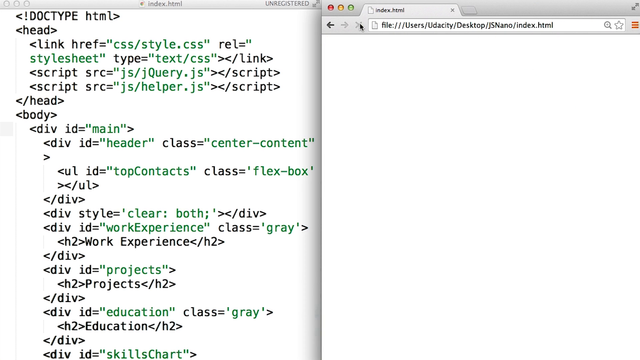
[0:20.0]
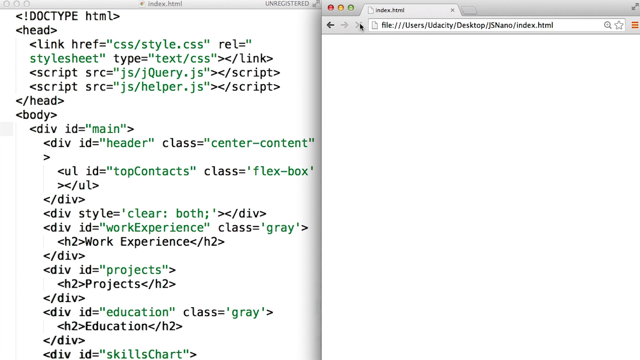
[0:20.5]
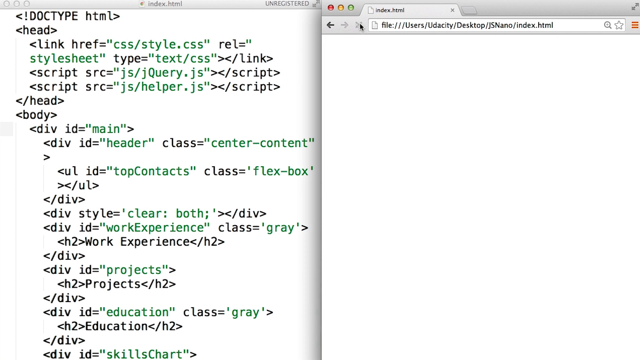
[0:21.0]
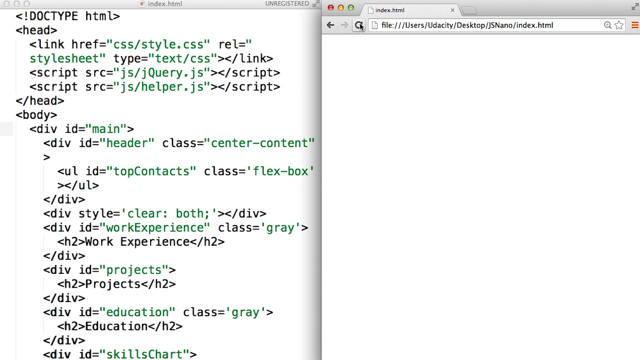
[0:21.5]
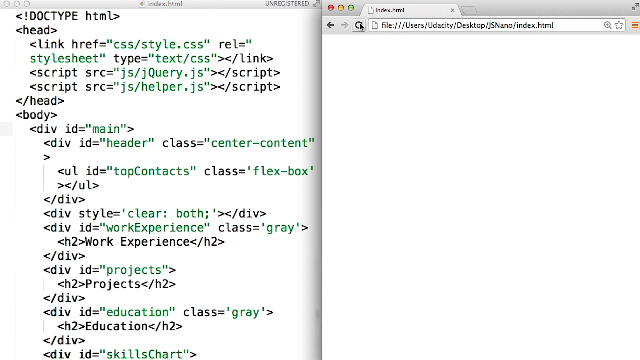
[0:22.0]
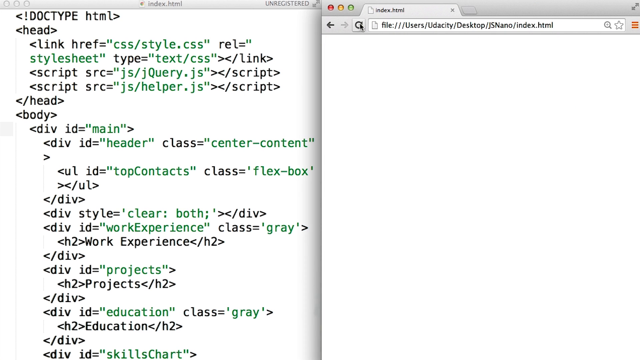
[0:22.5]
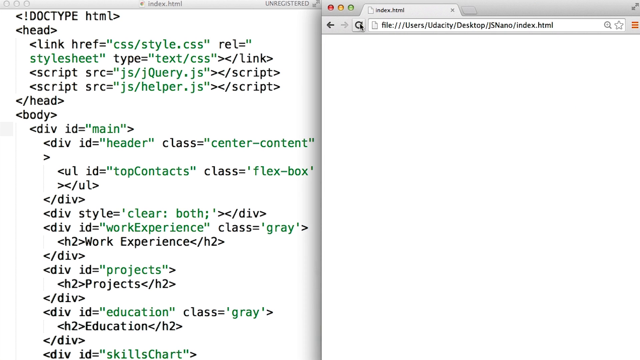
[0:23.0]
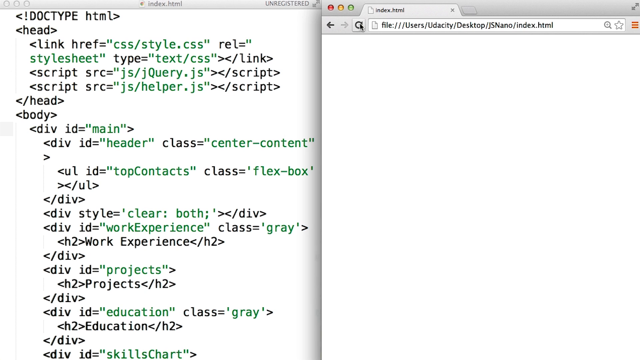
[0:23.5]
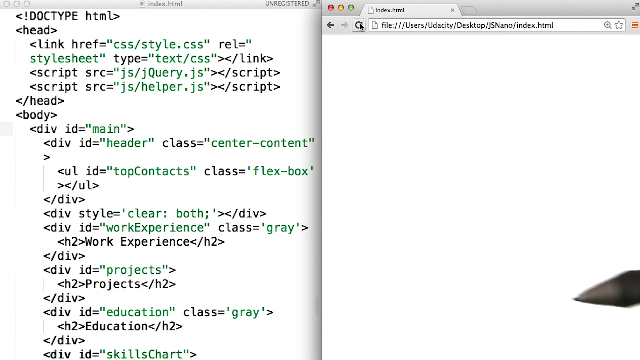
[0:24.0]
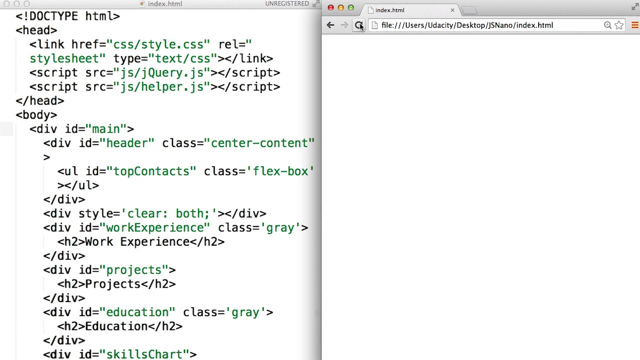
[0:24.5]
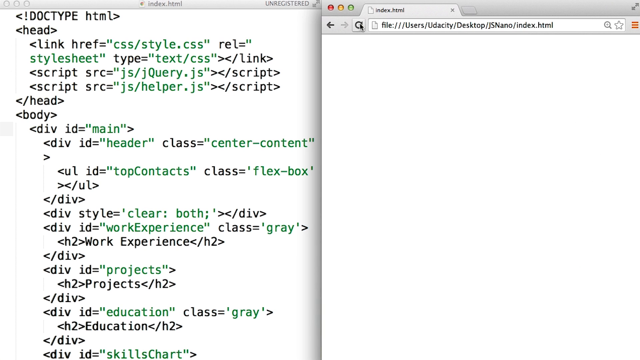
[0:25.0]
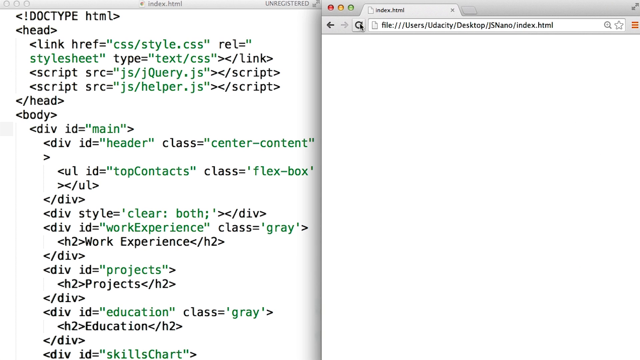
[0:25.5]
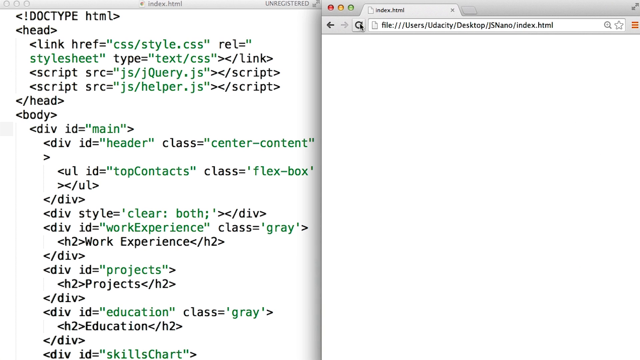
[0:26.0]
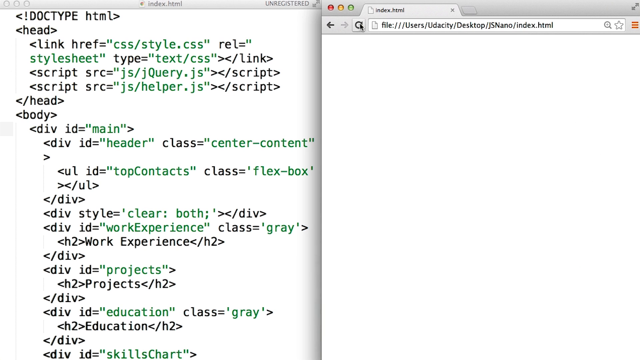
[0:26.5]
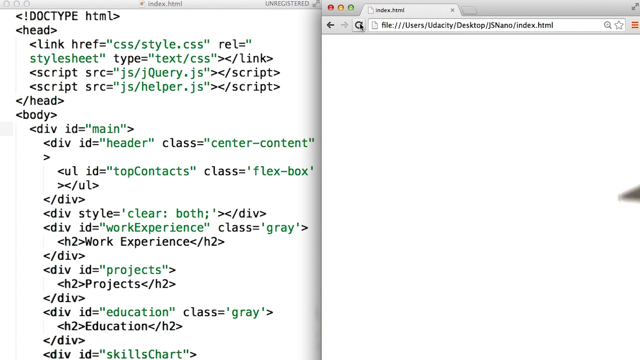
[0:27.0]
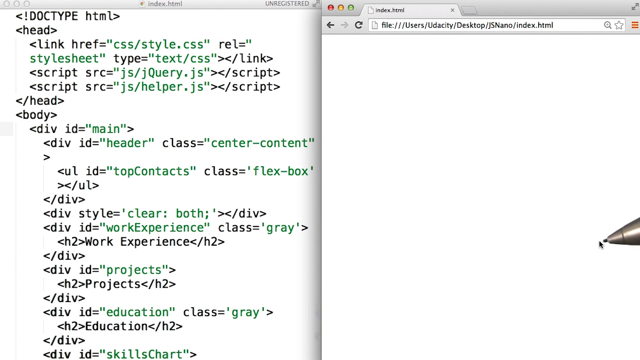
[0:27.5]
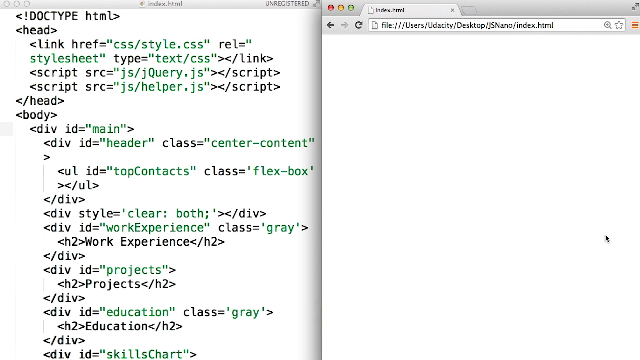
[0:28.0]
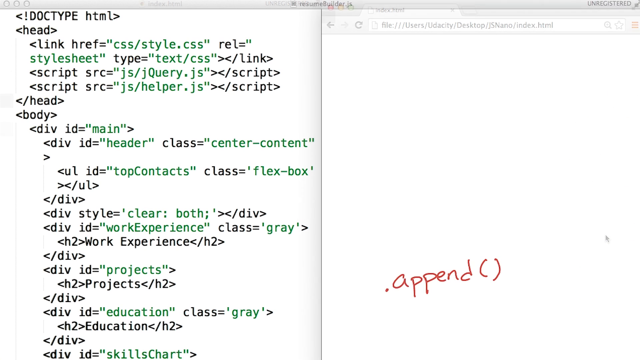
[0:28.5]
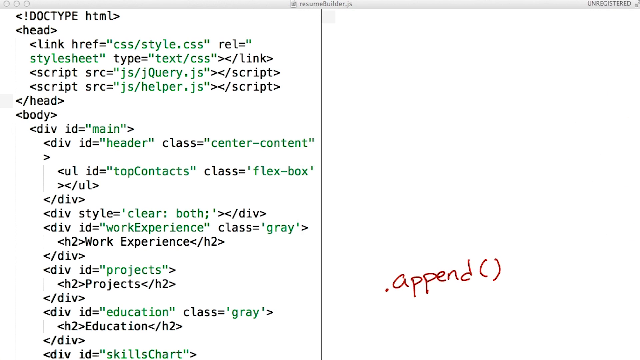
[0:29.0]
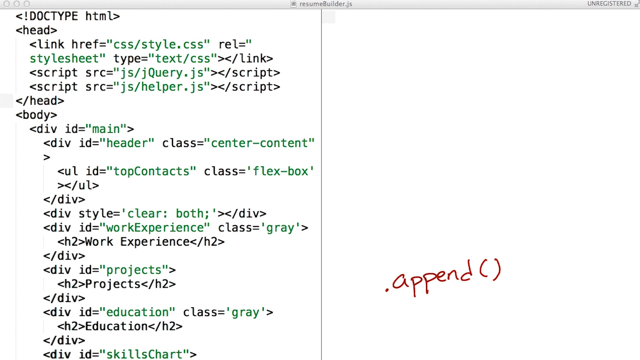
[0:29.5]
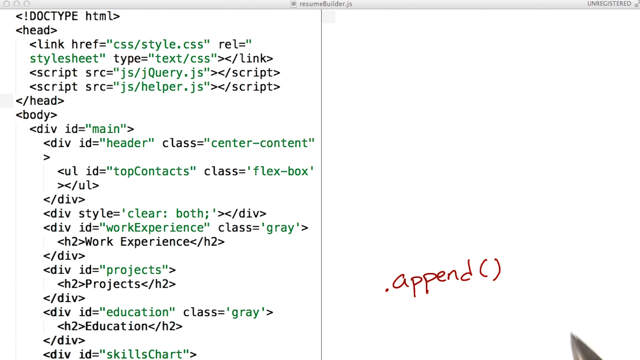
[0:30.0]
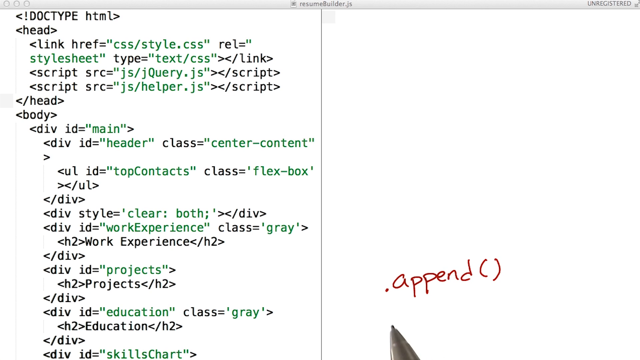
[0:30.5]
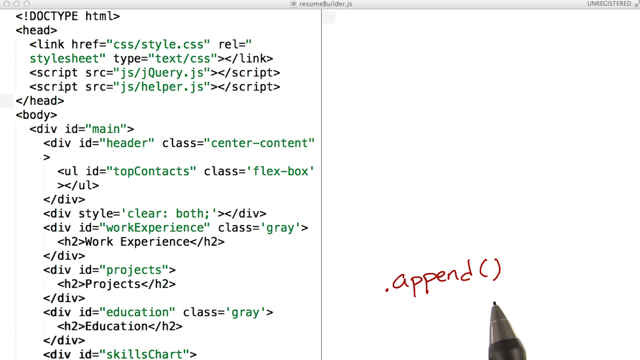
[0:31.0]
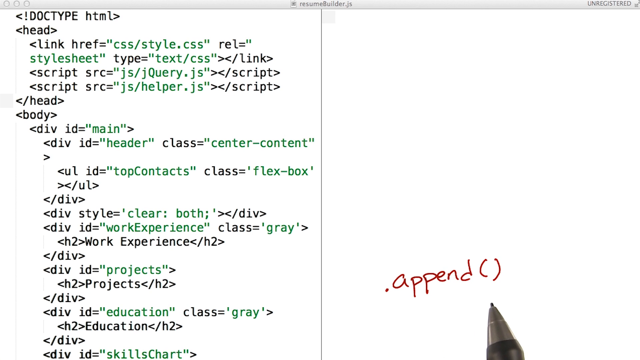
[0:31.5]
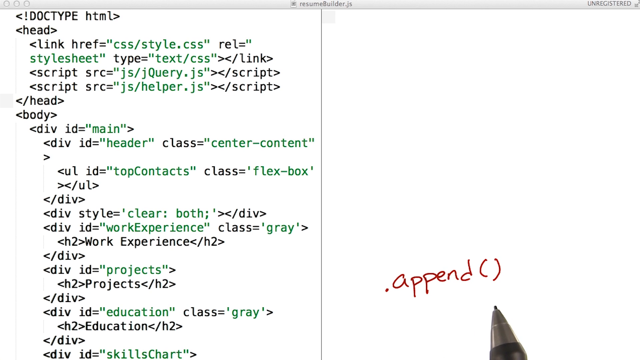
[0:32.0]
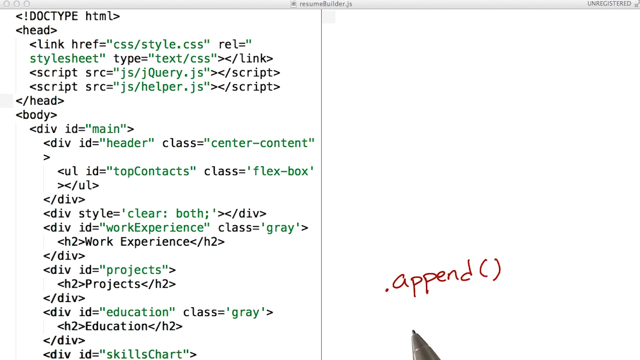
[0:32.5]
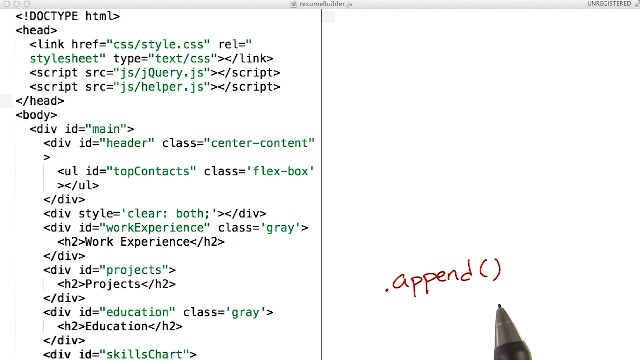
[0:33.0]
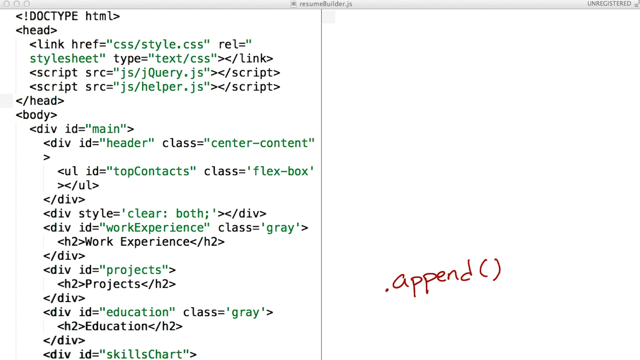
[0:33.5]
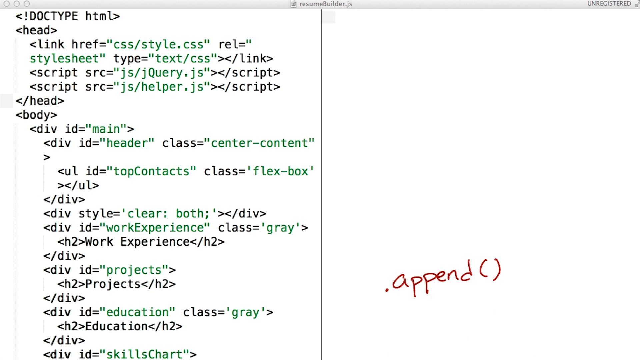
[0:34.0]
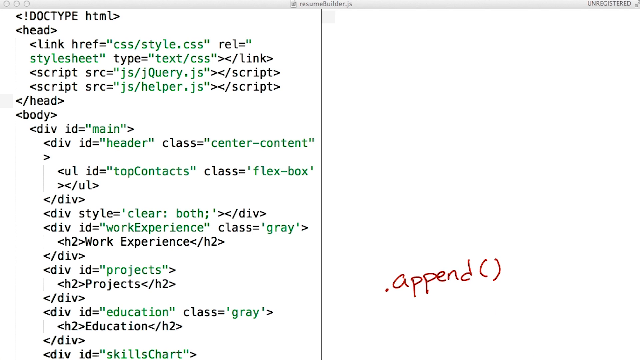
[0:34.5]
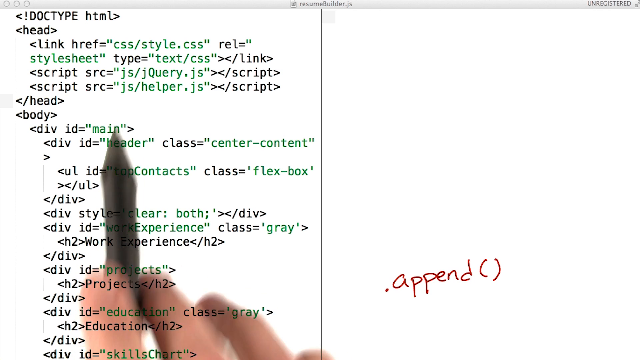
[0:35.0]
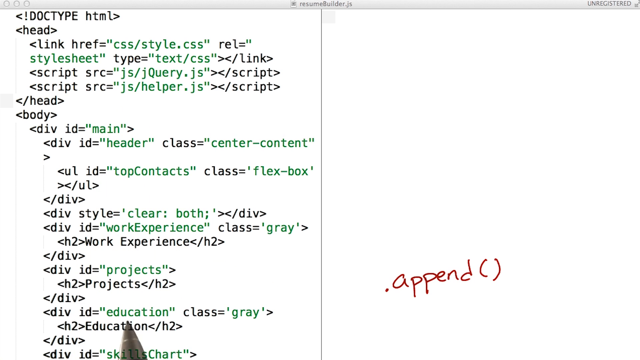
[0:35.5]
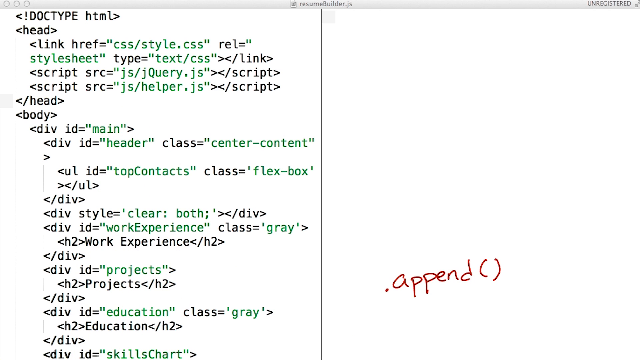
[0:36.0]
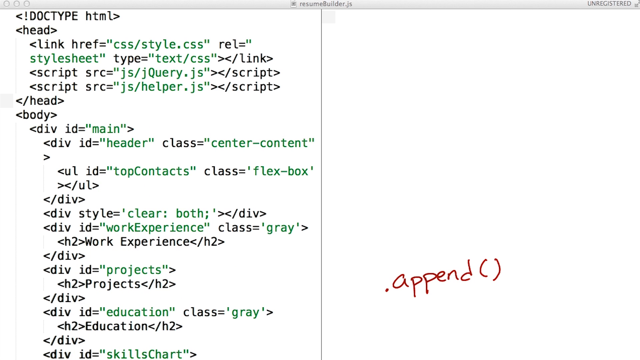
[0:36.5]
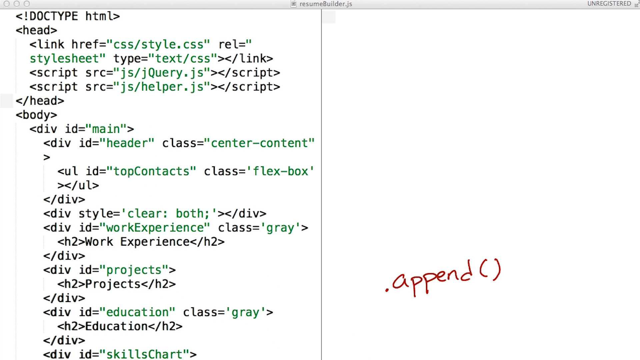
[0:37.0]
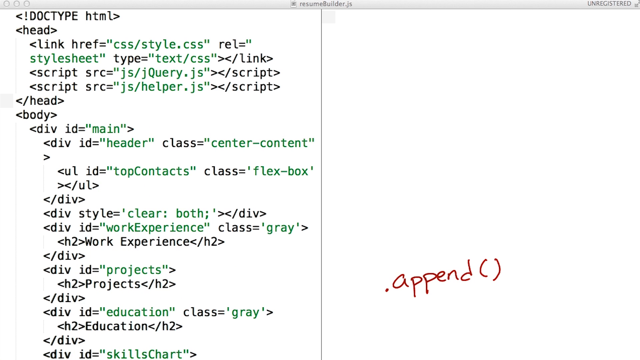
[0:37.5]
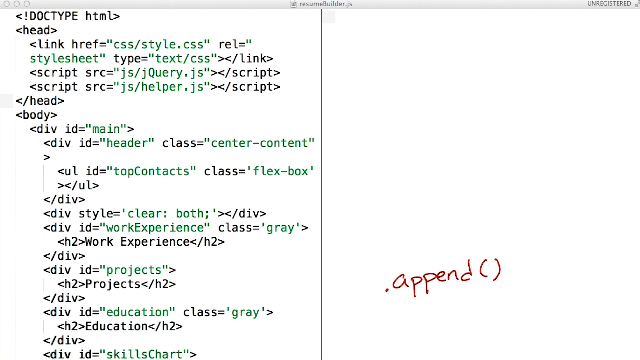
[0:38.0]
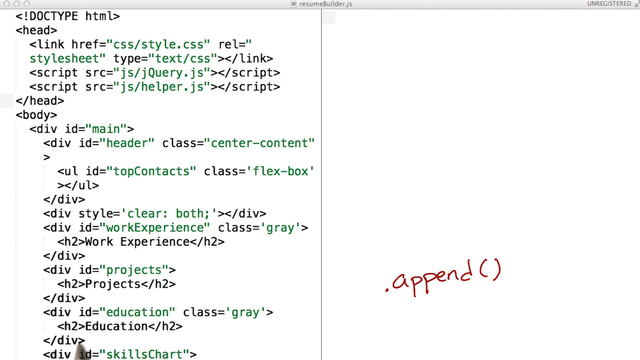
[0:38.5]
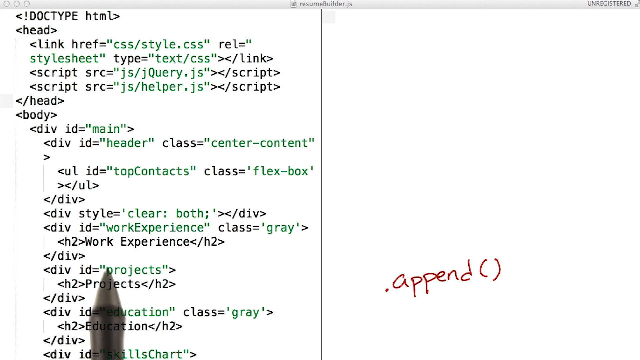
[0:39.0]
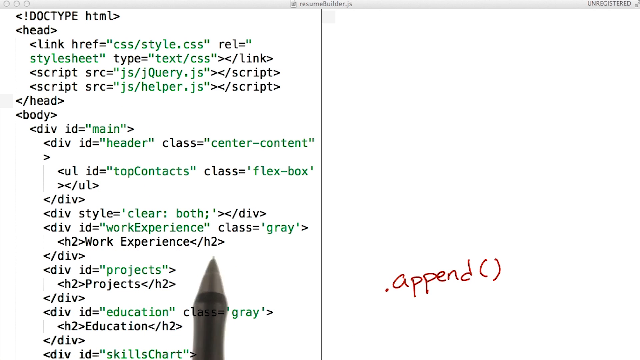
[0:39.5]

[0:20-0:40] The video continues showing how words are removed from a page that has a lot of words on it. Another page is open next to it, and the words to be removed are highlighted and moved over to the other side. Different kinds of words, including "HTML", are written on the page, all mixed up. The words that need to be shifted are moved onto the clean new page.